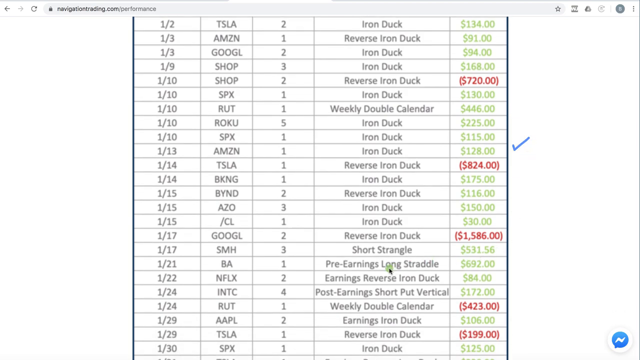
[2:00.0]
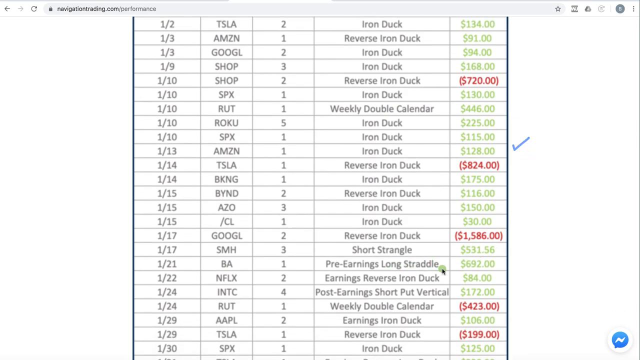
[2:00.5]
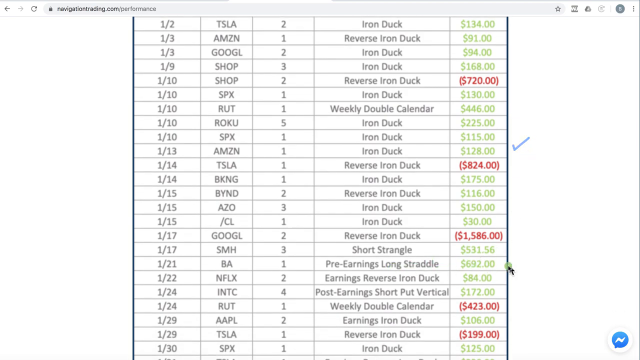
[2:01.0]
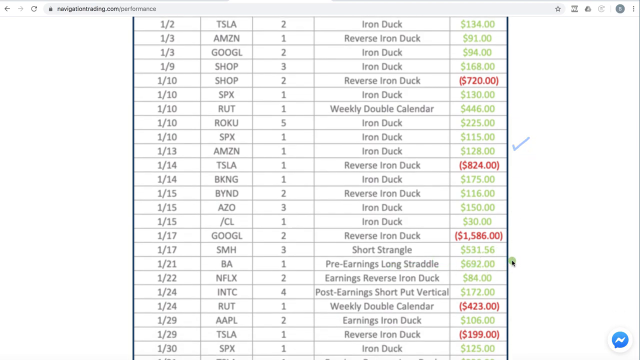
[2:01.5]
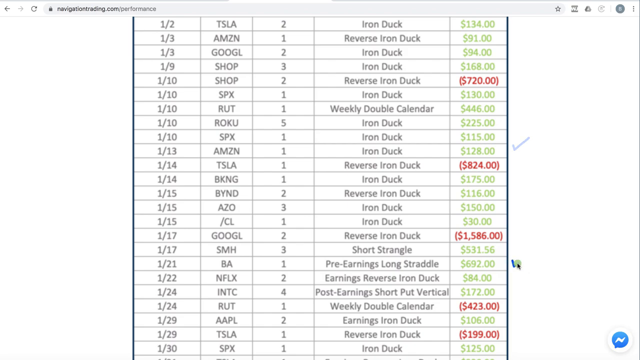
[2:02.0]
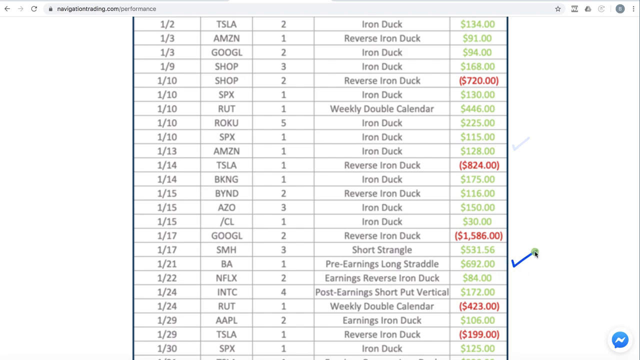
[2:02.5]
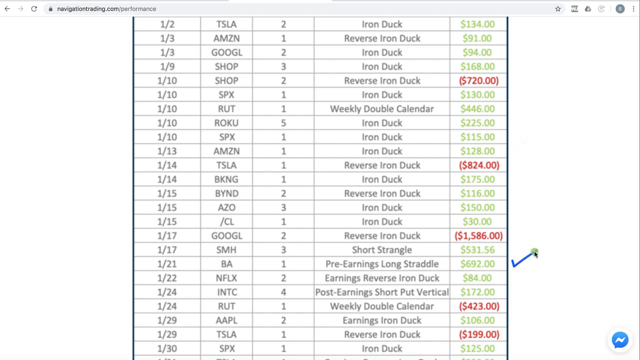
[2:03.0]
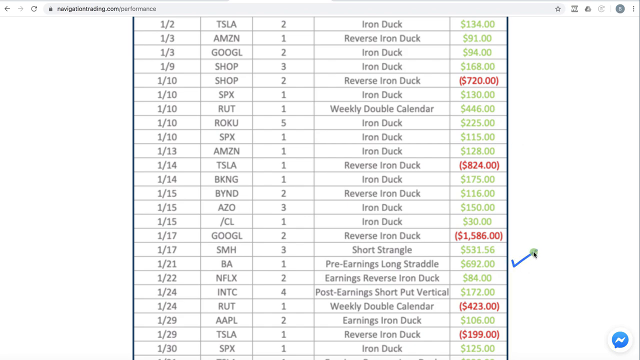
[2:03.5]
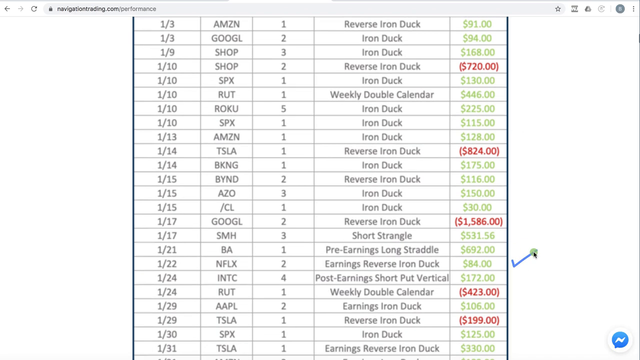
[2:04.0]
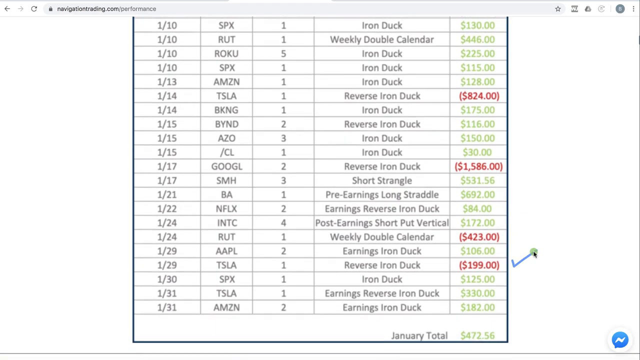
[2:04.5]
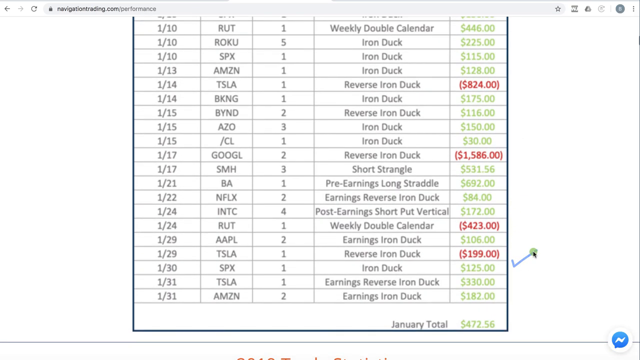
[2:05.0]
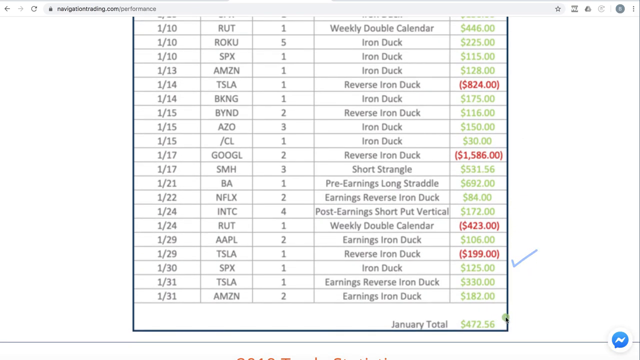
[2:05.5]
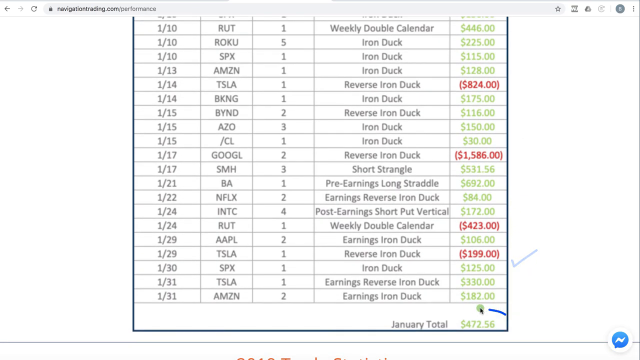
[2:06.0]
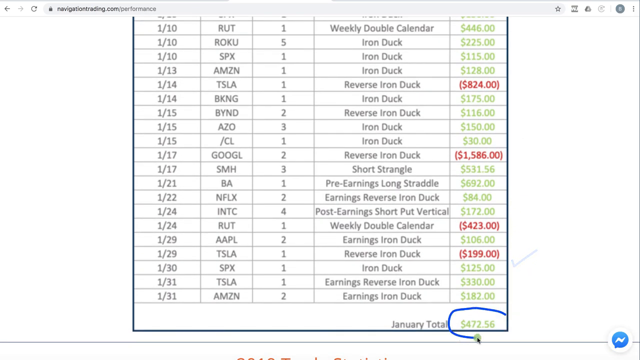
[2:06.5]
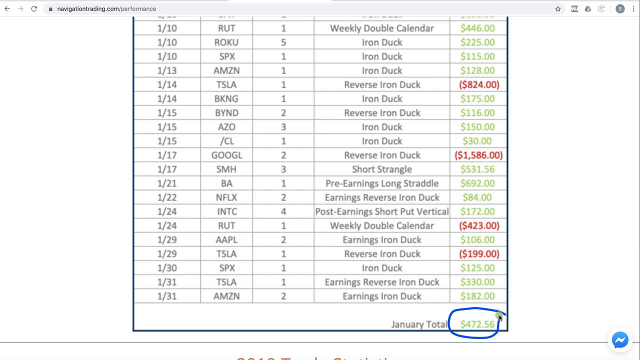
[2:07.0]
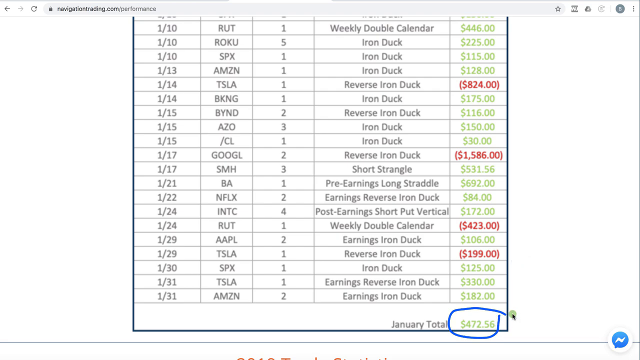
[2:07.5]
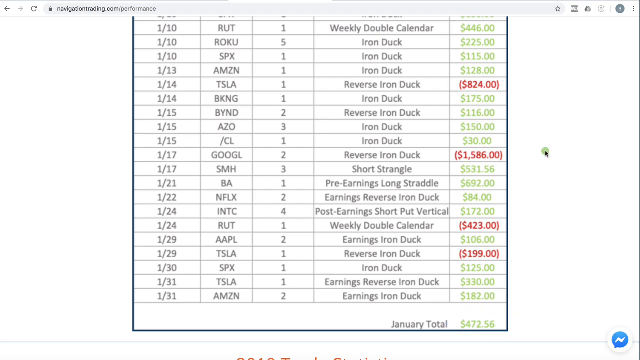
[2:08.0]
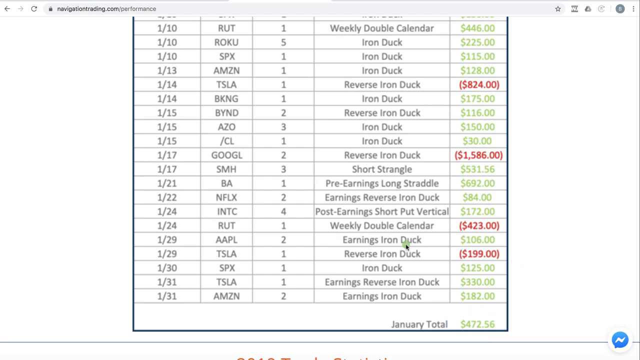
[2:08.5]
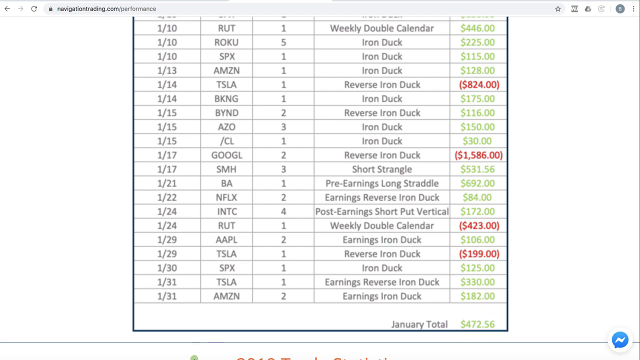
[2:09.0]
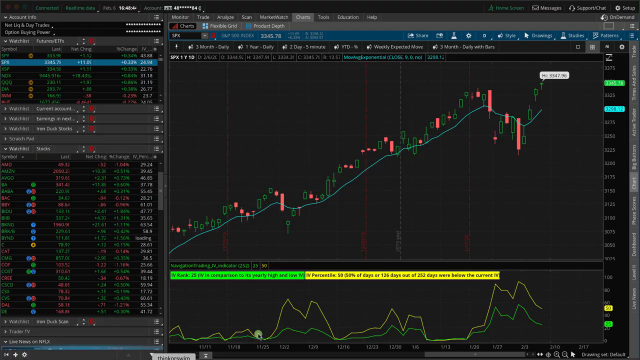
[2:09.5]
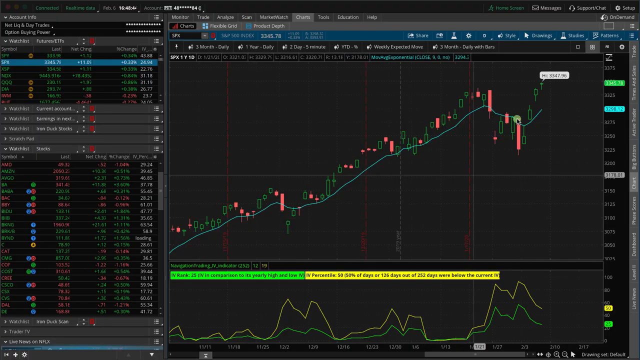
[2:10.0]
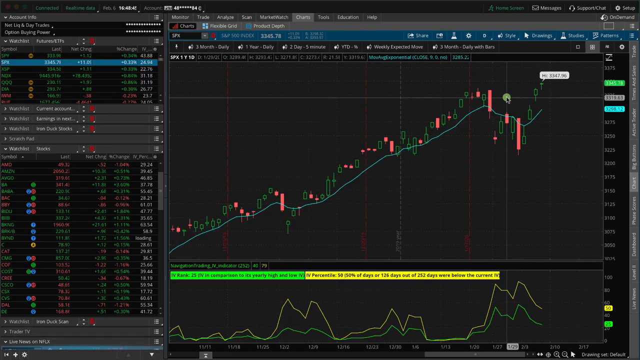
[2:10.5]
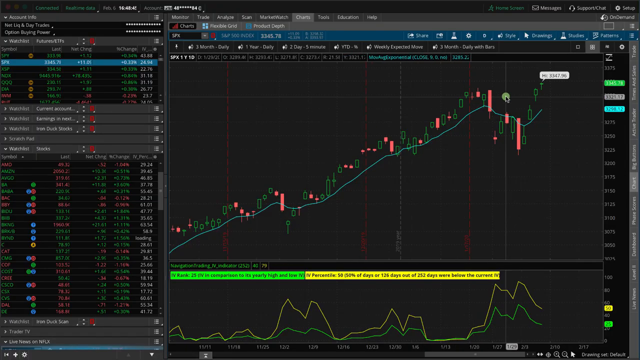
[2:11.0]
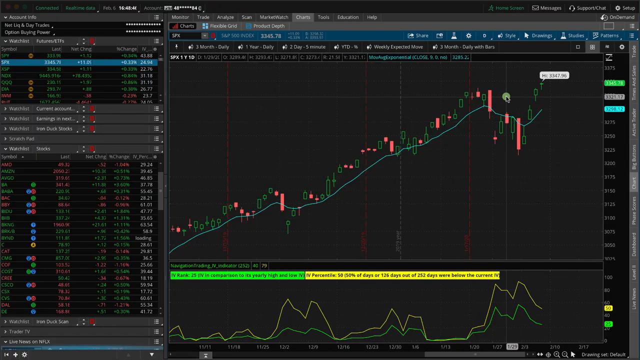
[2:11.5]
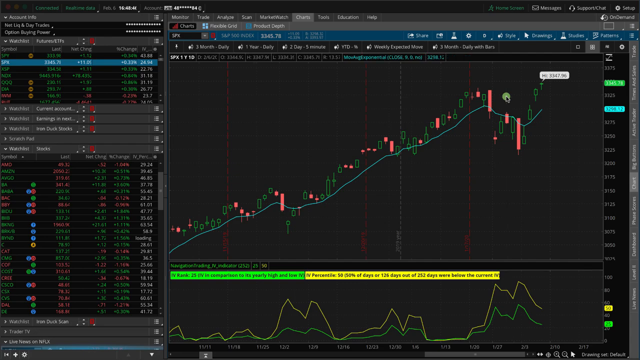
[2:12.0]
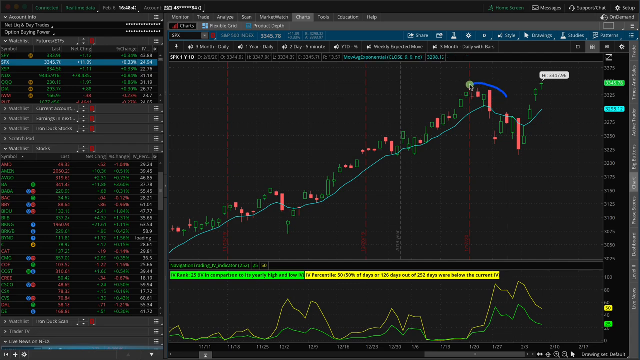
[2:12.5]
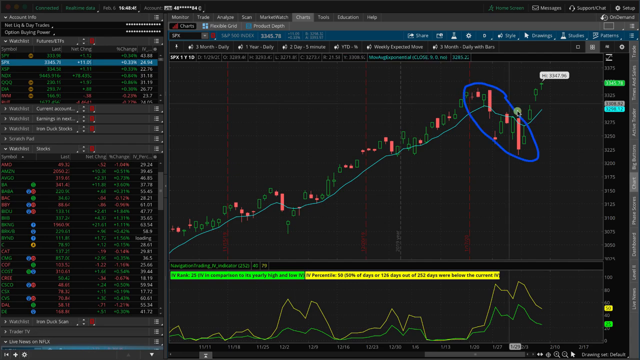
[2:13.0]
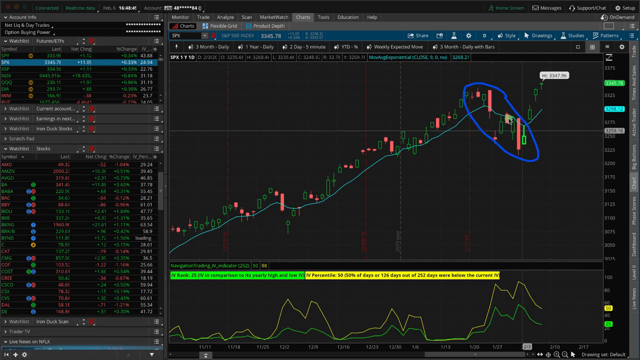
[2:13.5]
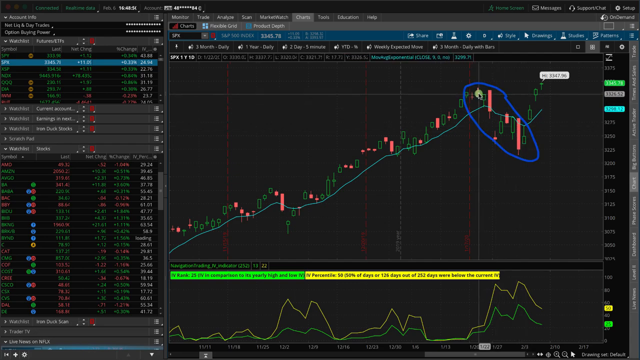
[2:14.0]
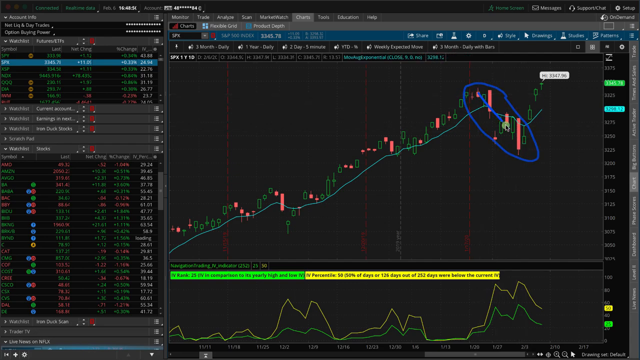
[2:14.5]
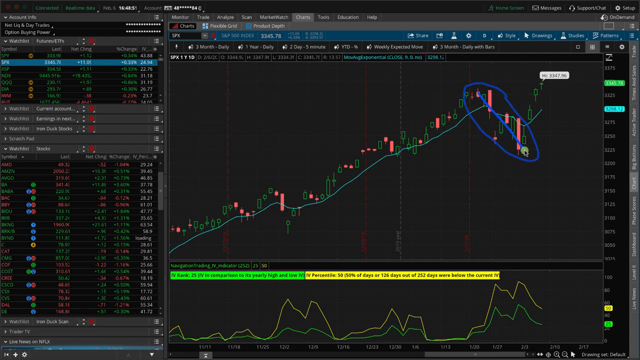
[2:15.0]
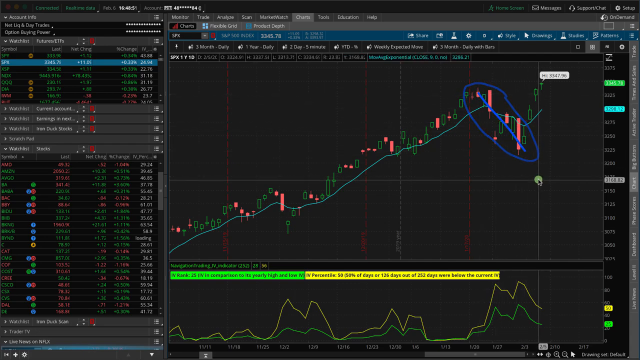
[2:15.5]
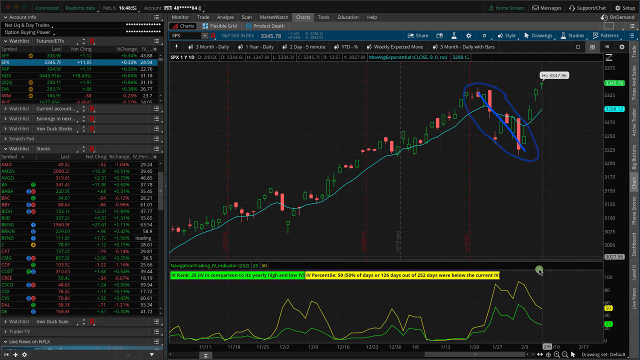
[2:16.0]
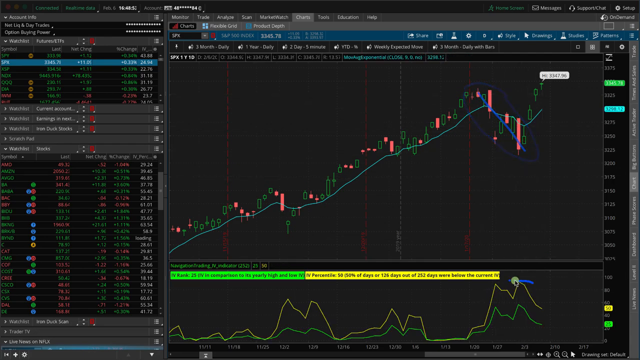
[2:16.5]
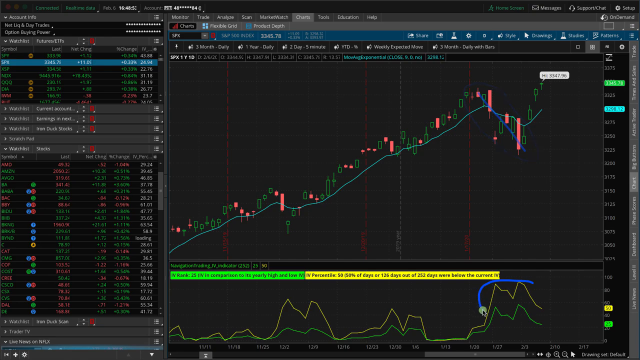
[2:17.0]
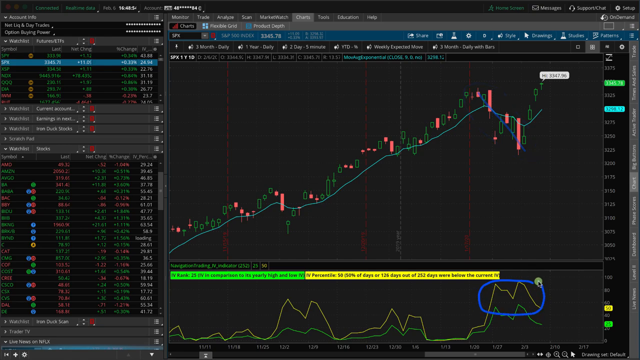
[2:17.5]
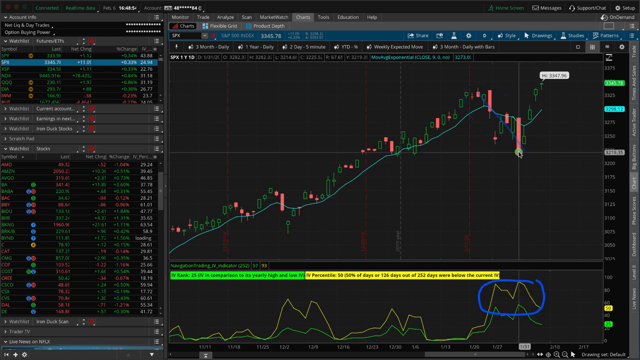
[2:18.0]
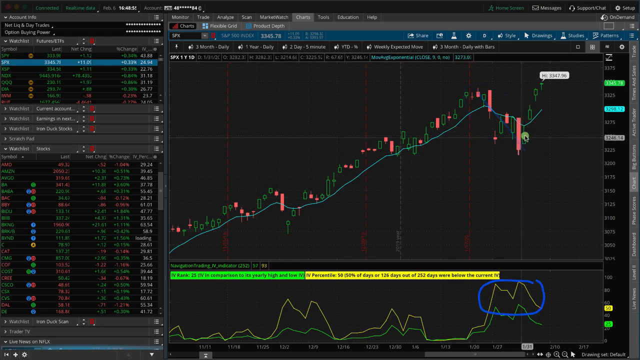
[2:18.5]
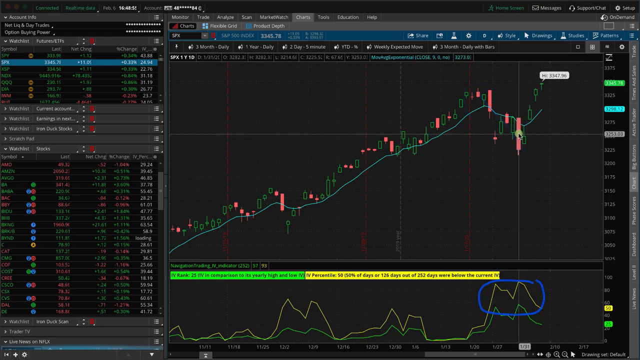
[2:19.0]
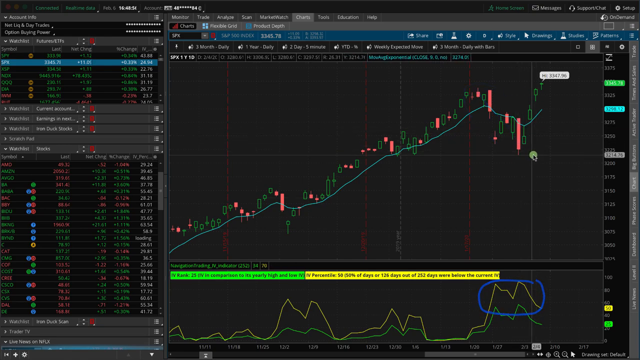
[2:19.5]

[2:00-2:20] A trade strategy column lists iron dock and reverse iron dock. Trades are listed down the table showing either profit or no profit, with a column of stocks and dates associated with each trade, and profits versus non-profits are linked to the trade strategy used.